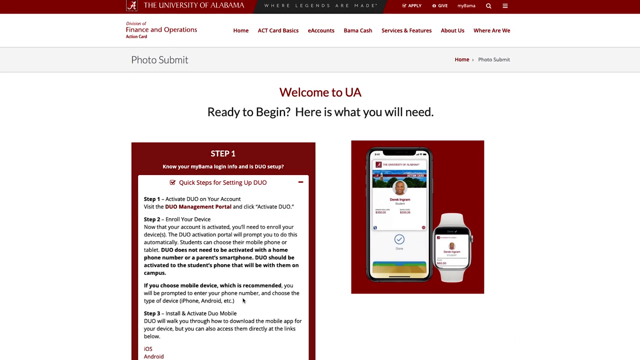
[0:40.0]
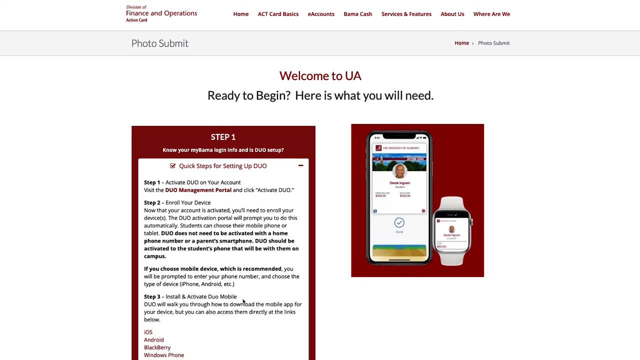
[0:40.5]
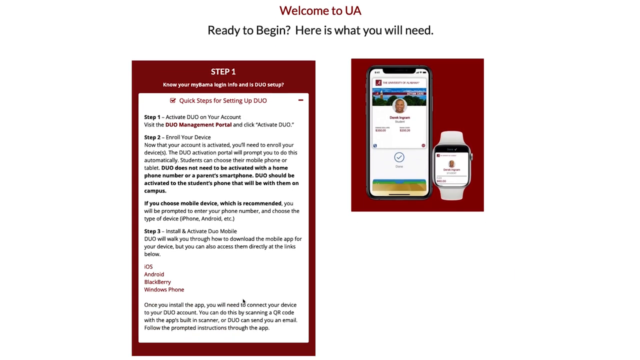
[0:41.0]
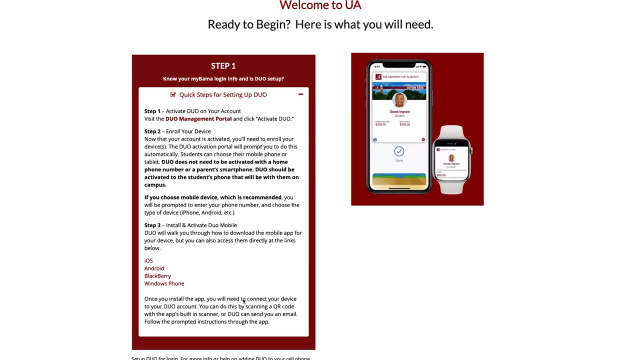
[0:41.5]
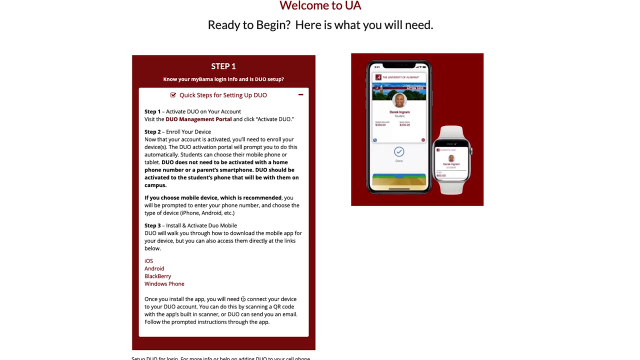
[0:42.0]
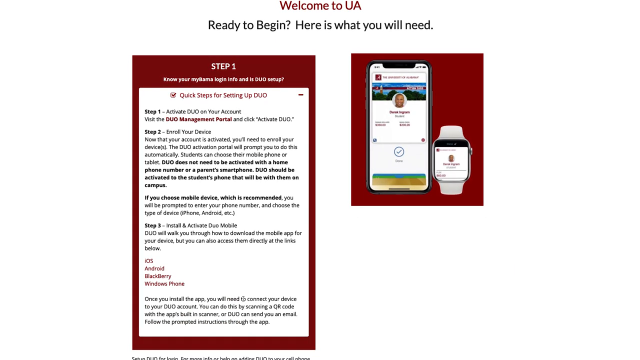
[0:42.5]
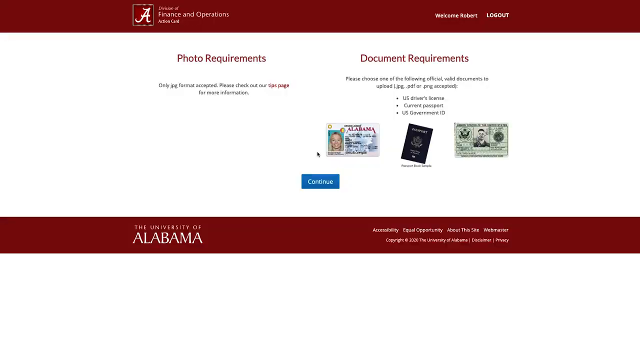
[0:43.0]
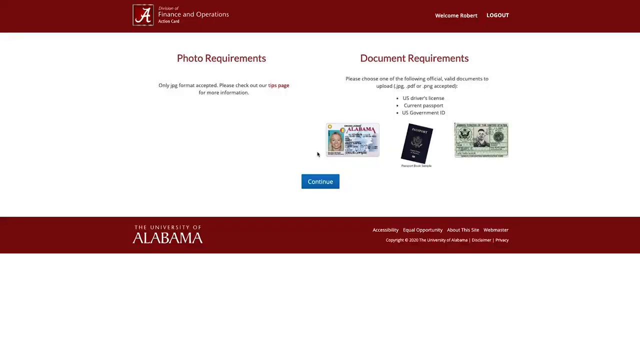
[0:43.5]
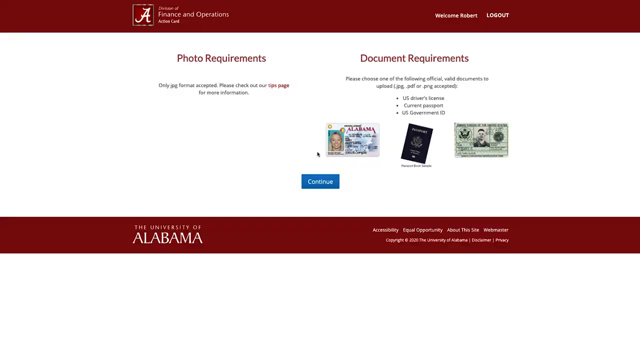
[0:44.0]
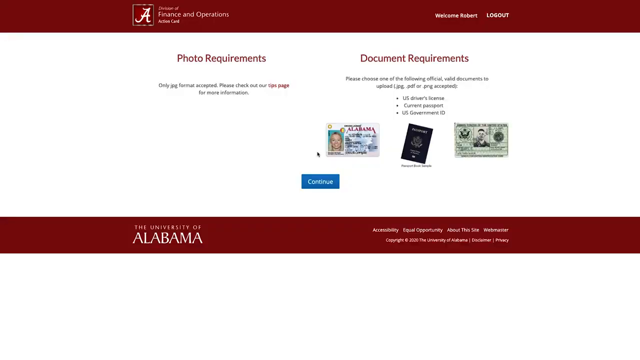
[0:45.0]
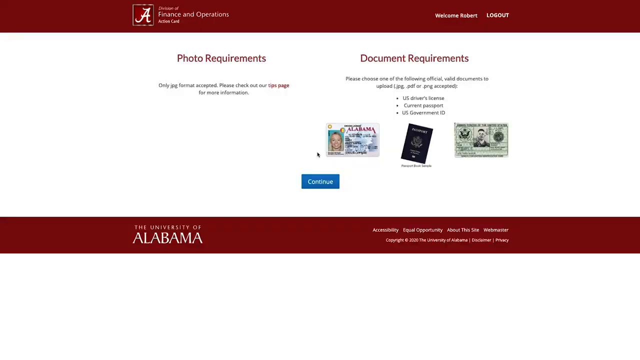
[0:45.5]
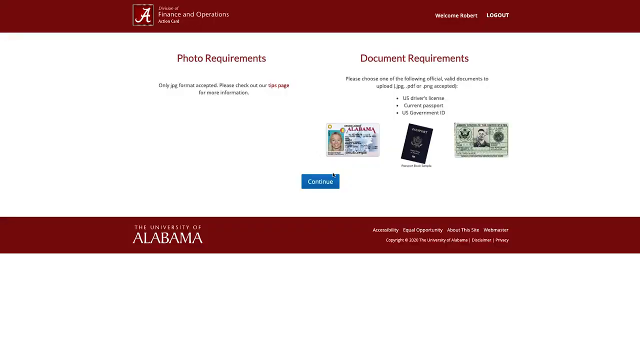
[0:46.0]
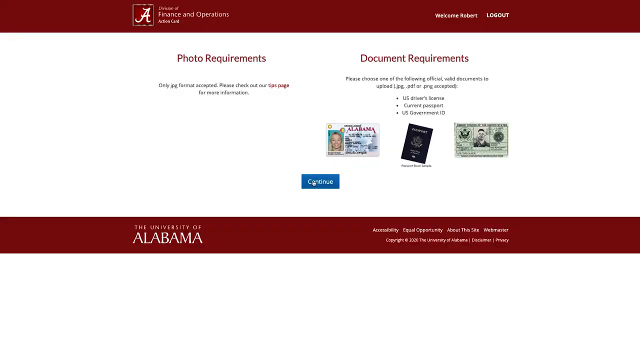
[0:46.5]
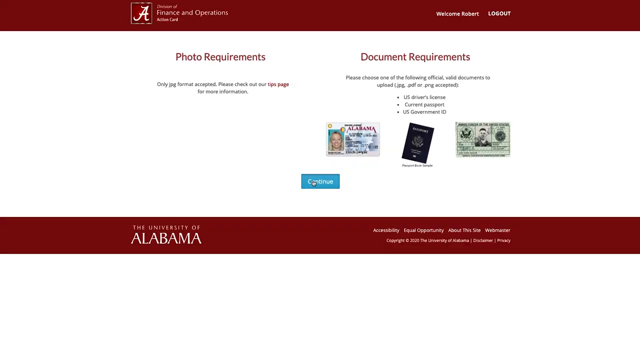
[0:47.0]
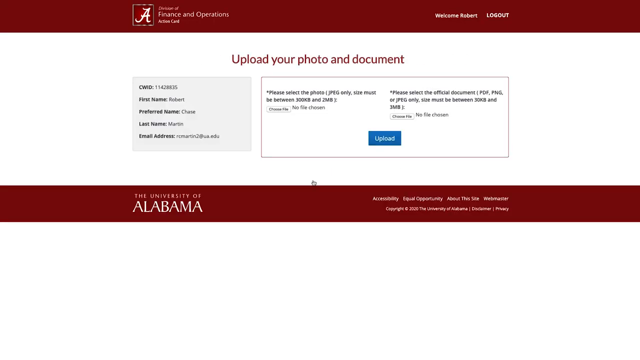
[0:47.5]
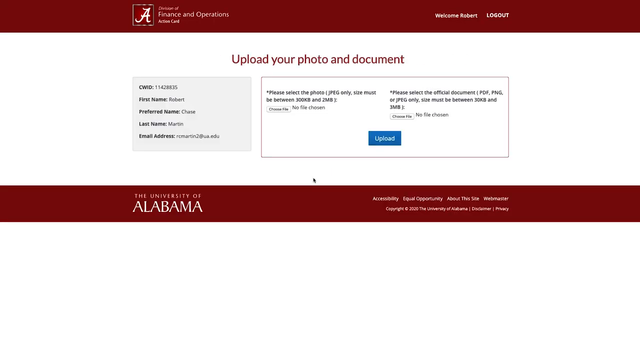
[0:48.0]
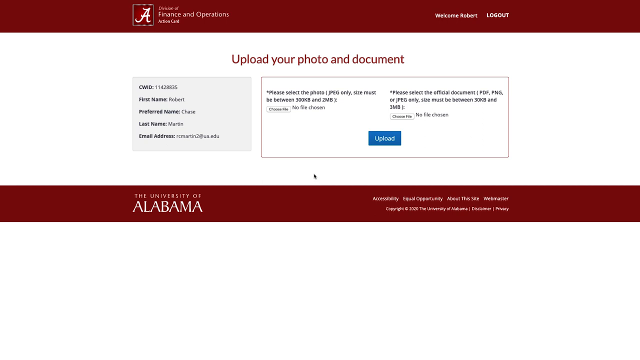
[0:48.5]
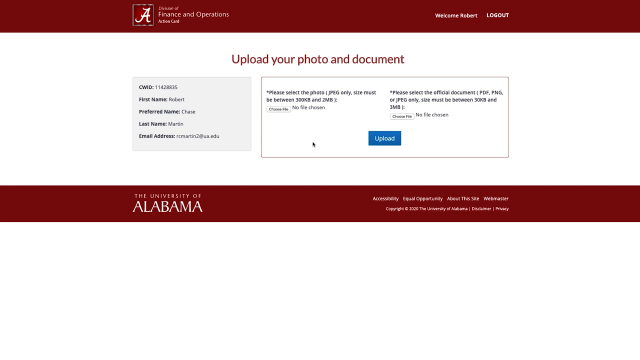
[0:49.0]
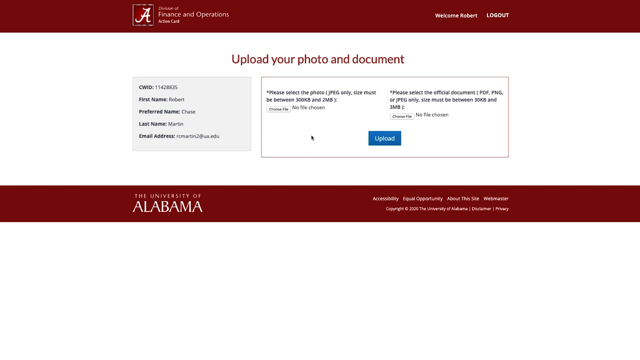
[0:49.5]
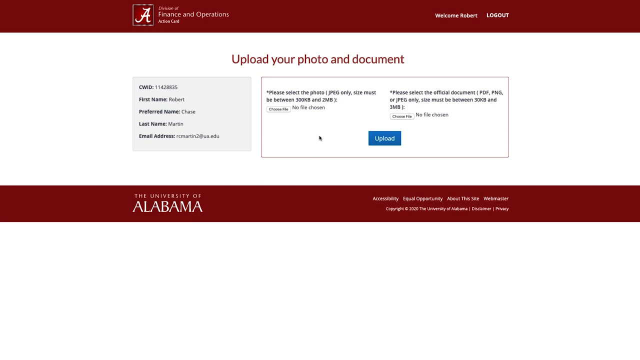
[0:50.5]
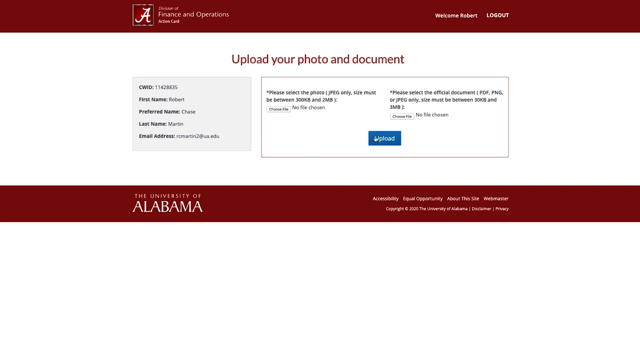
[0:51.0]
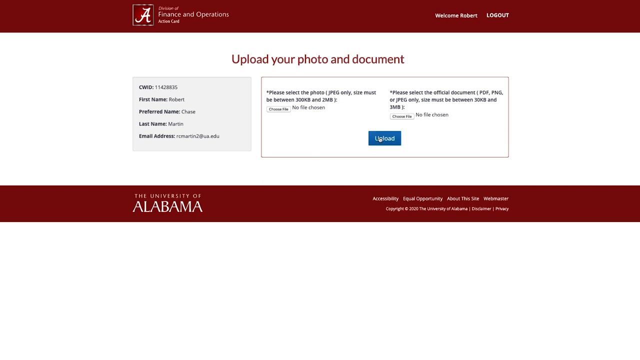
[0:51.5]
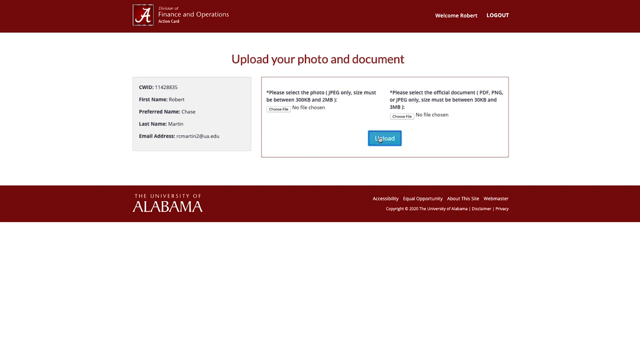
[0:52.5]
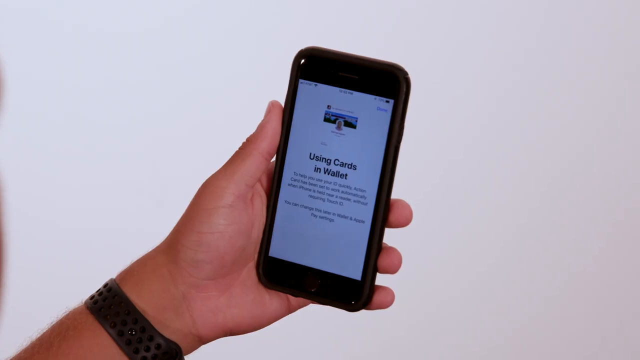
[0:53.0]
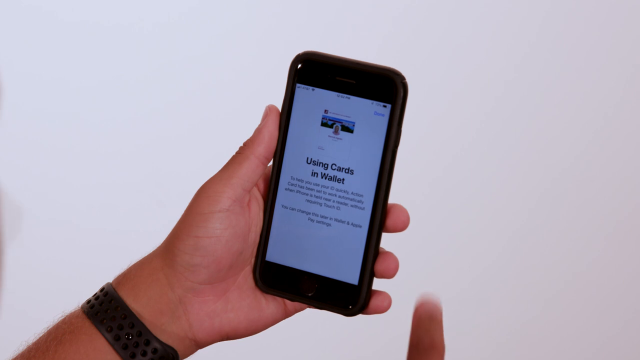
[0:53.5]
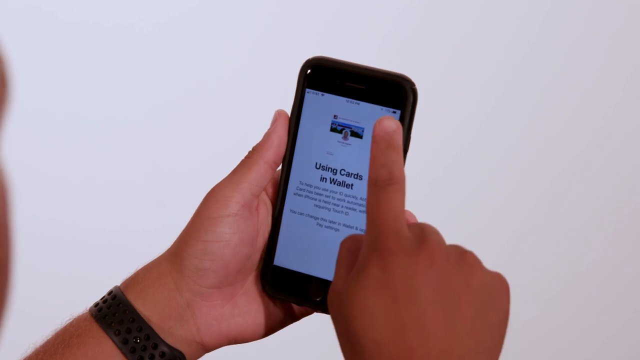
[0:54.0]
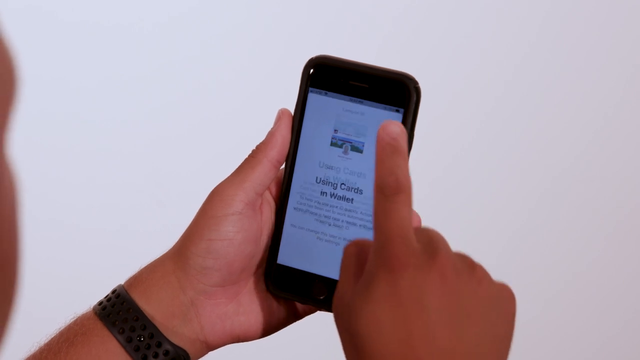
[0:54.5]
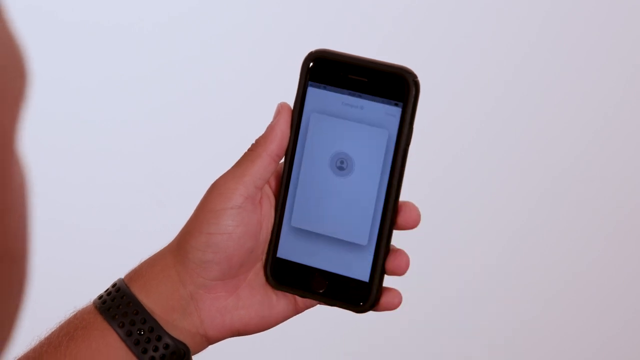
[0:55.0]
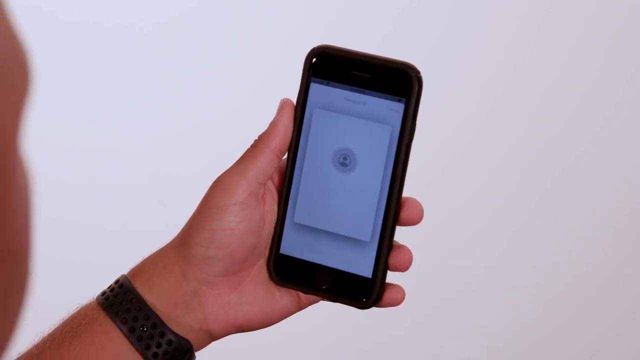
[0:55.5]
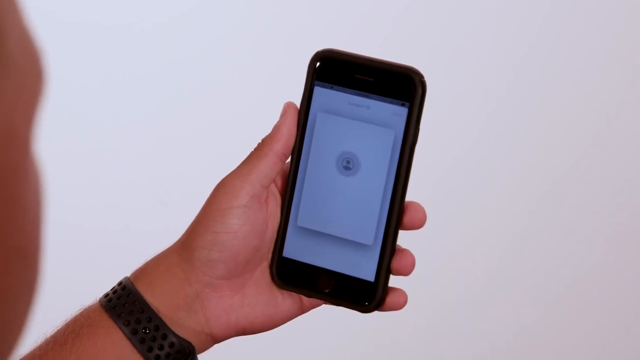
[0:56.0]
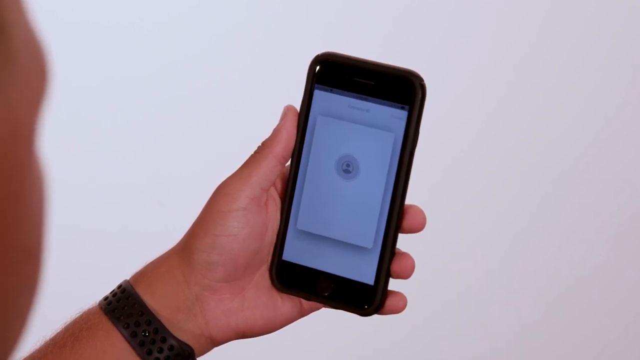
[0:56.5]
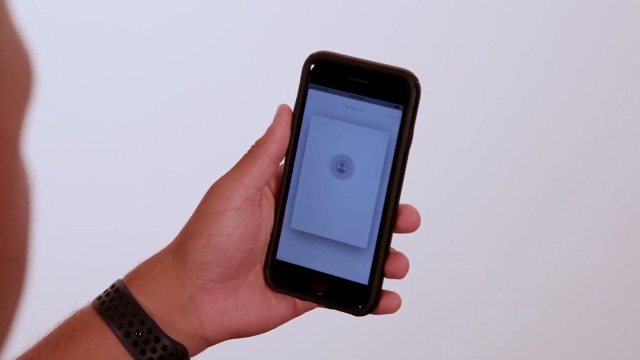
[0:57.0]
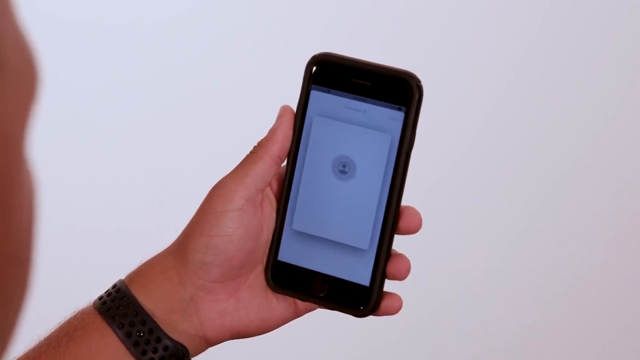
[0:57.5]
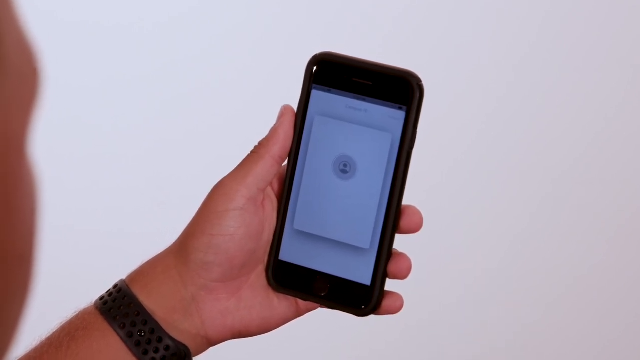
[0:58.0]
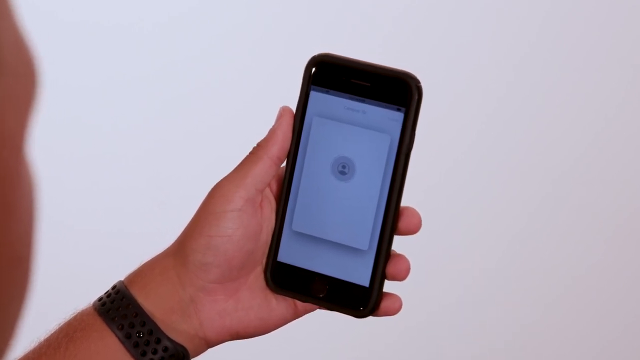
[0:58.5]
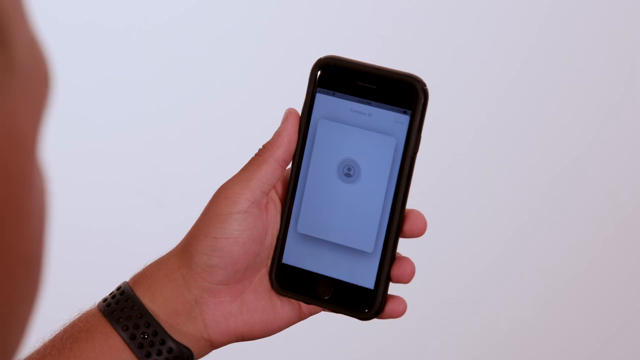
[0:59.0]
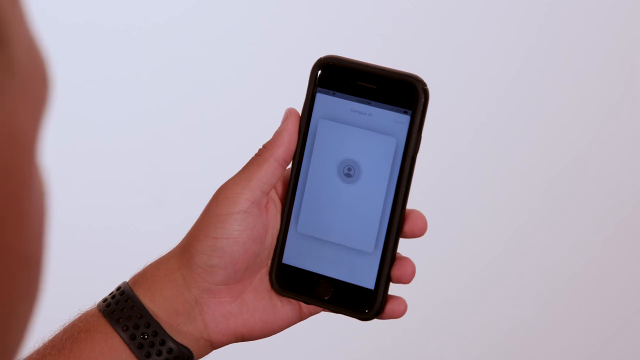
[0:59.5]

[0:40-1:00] A web page reads "welcome to UA" in red, followed by "ready to begin, here is what you will need". On the right there is a mobile phone and a smartwatch. On the left are "quick steps for setting up Duo": step one, "activate Duo"; step two has a lot of text; step three lists the places where it can potentially be used: "iOS", "Android", "BlackBerry", "Windows Phone". Another page follows, with "University of Alabama" prominently featured at the bottom and "financing operations" and its logo at the top. On the right side are "welcome", the name "Robert", and "logout". On the left is "photo requirements"; on the right is "document requirements" with three images depicting an ID card, a passport, and something like a credit card with a photo on it, though it is unclear and might be another type of document, possibly an SSN. A blue continue button is at the centre. Next a page reads "upload your photo and document", and the upload button is clicked. A person then takes a picture on a mobile phone held in their hand.